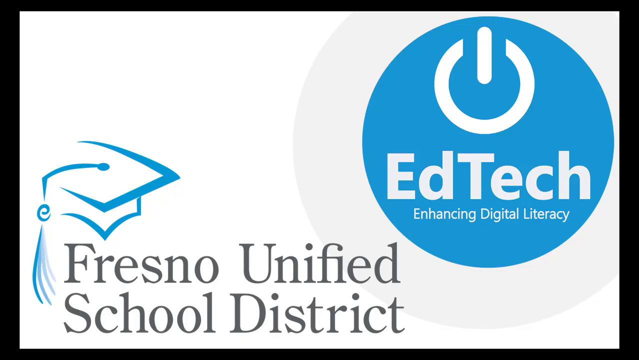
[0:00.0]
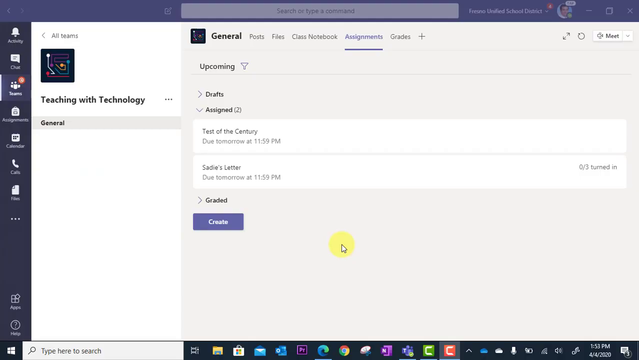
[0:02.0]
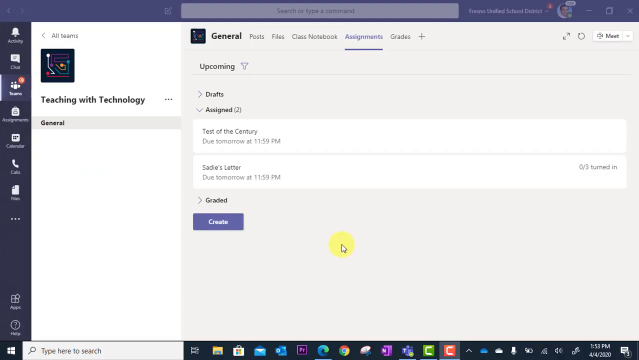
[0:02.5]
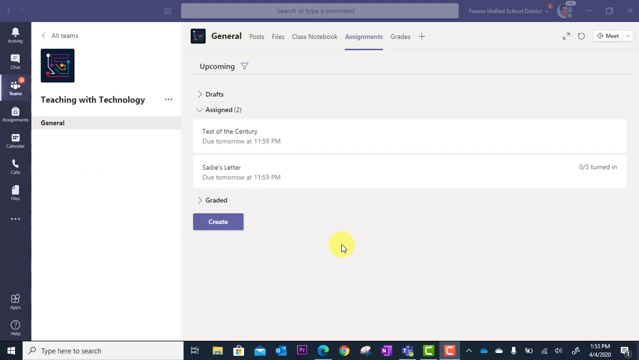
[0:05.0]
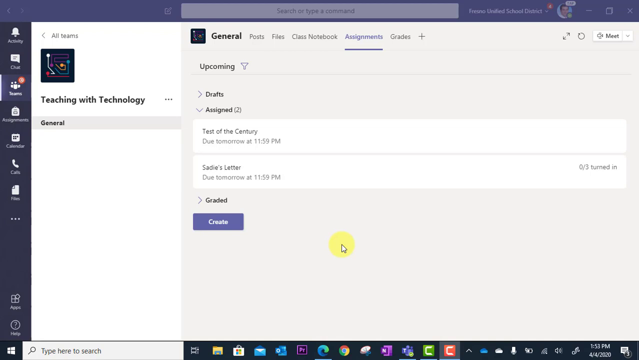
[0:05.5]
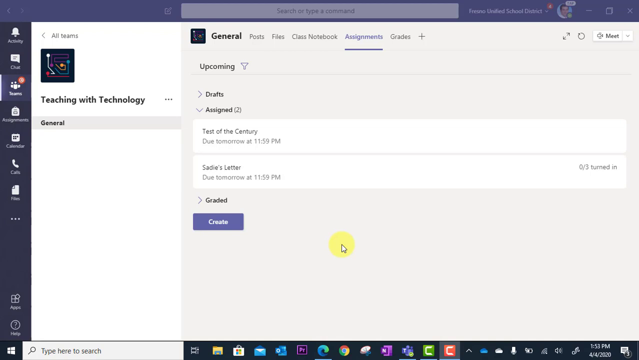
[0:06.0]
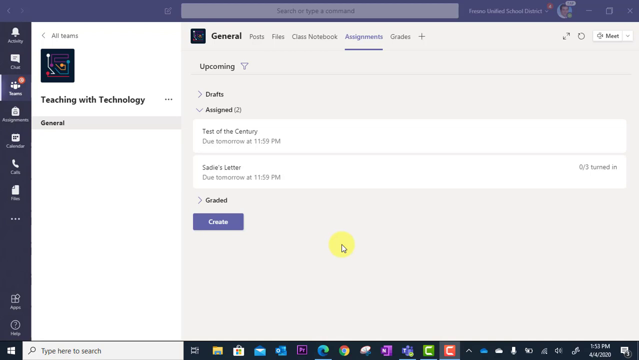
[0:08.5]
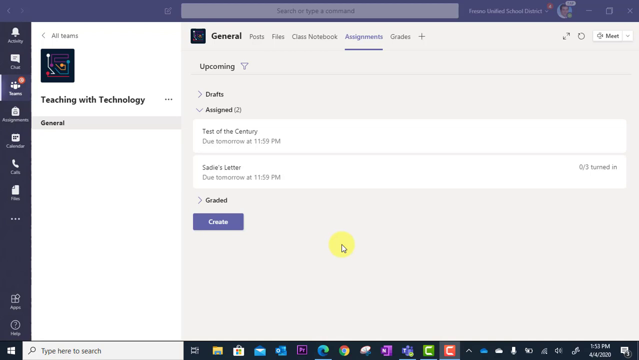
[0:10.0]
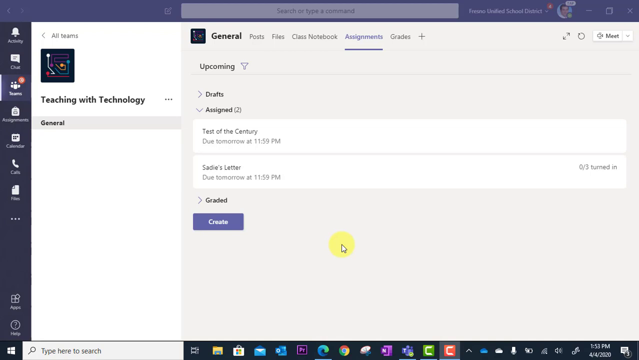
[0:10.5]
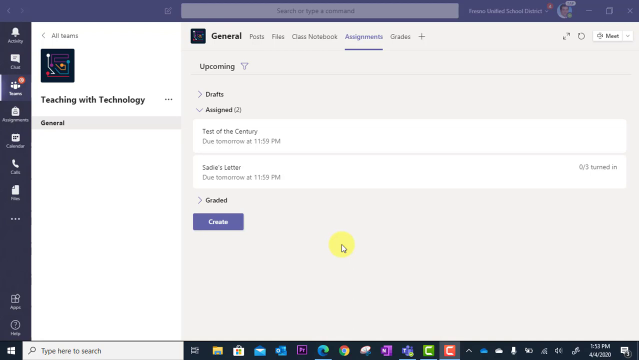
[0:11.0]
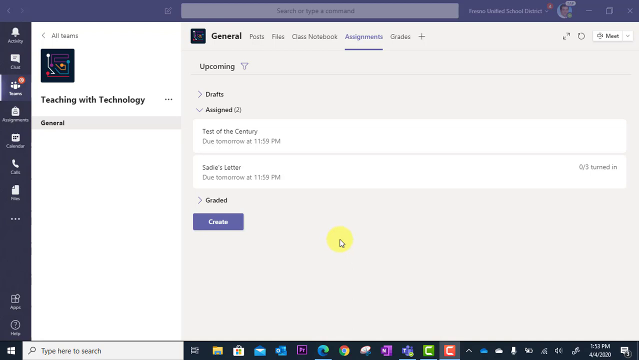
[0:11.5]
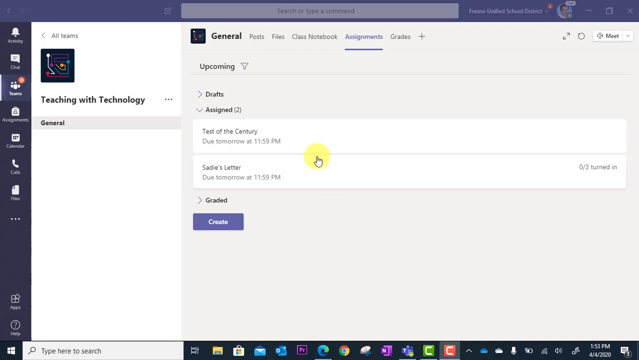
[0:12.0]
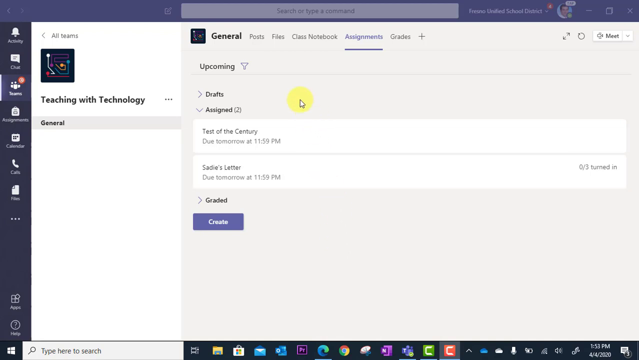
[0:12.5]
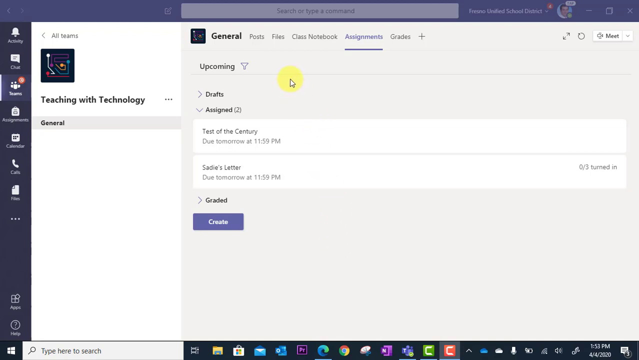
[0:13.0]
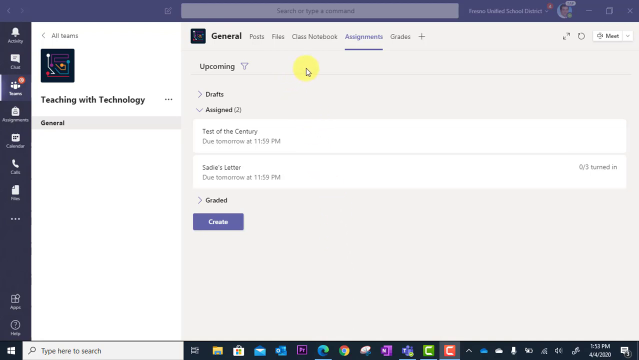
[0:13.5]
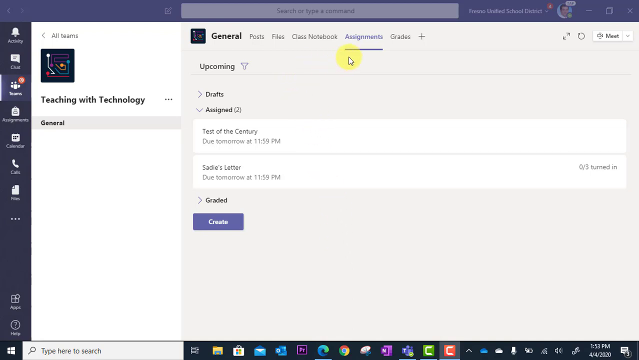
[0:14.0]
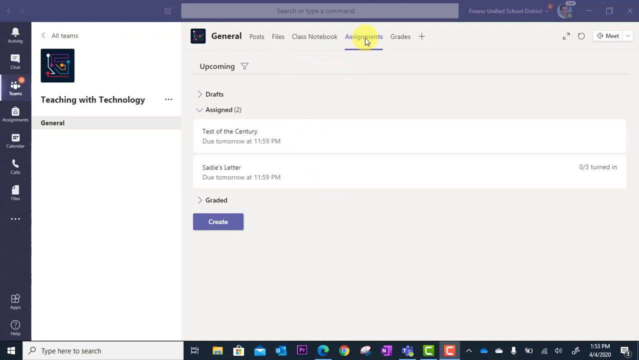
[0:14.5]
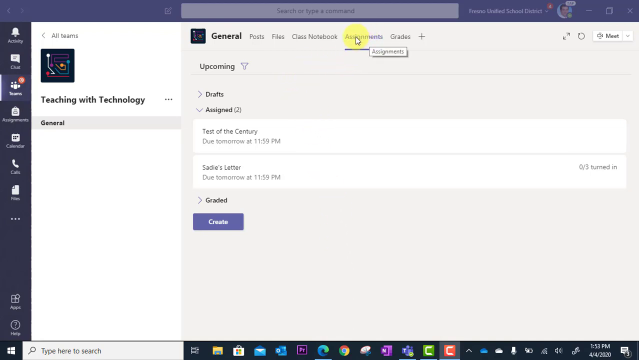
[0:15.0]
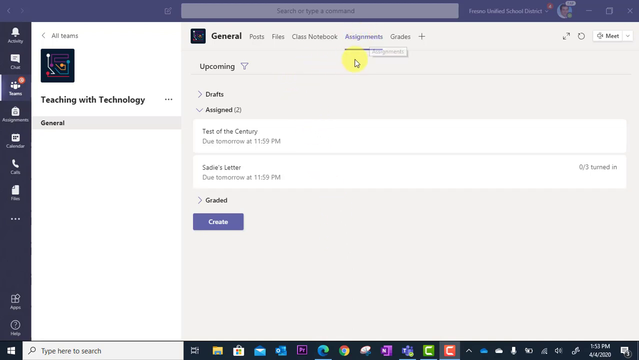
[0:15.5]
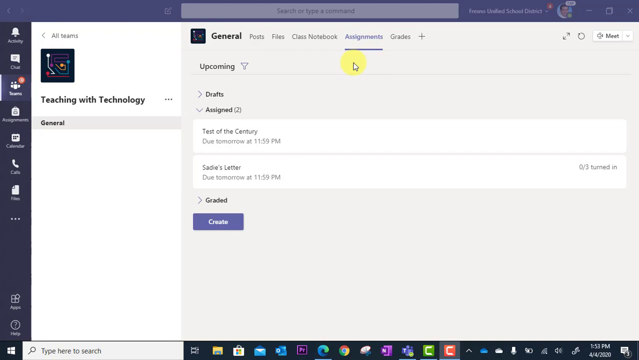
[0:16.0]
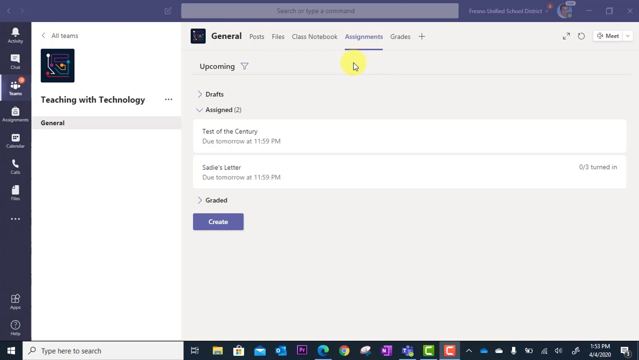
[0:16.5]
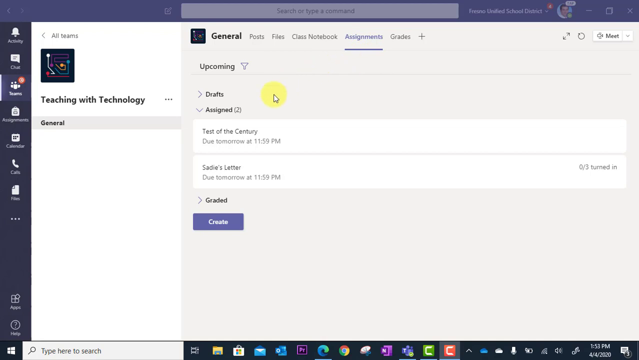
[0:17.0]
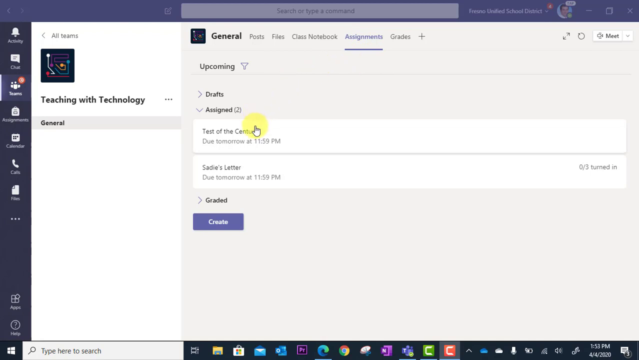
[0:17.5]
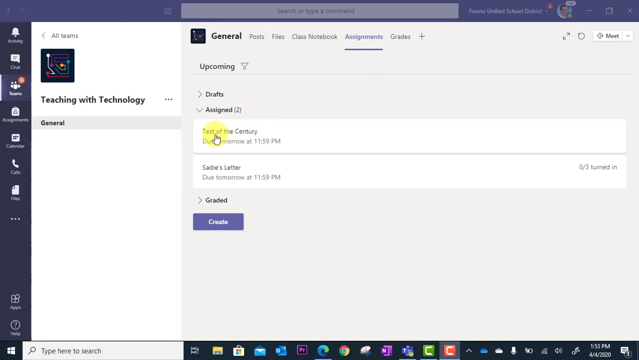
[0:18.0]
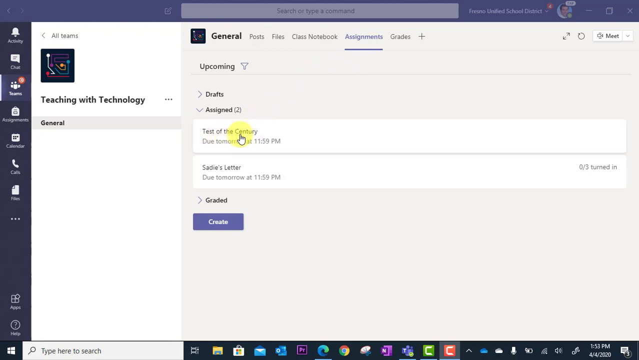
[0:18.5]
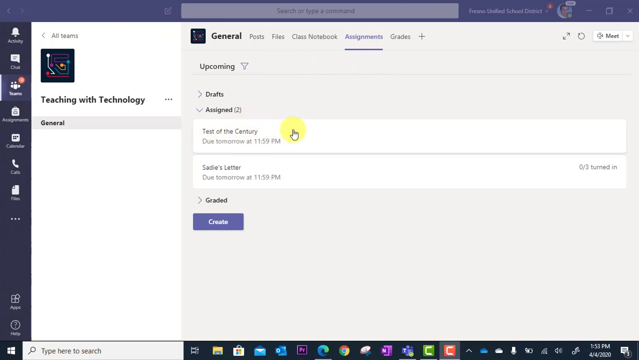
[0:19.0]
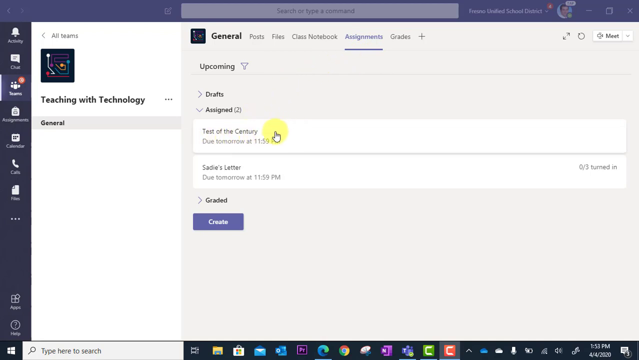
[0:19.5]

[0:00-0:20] A computer screen shows a Microsoft Teams interface open to a class workspace titled "Teaching with Technology." The left side of the window contains the navigation panel, where "General" is highlighted under the team name. In the top menu the "Assignments" tab is active, and beneath it the view is set to "Upcoming." Two assigned tasks are listed under the "Assigned" section: the first is "Test of the Century," due tomorrow at 11:59 p.m., and the second is "Sadie's Letter," also due tomorrow at 11:59 p.m., with a status showing 0 out of 3 turned in. On the right, below the Assignments, is a purple "Create" button. Further down is a Skills list and a collapsible "Graded" section. The computer's desktop taskbar is visible at the bottom, showing application icons such as Microsoft Edge, Excel, PowerPoint, Word, Outlook, and Teams. The scene then transitions to a static slide featuring two logos side by side on a white background. On the left is the Fresno Unified School District logo: a stylized blue graduation cap with a tassel-shaped lowercase "e" above the words "Fresno Unified School District" in a gray serif font. On the right is the EdTech logo inside a blue circle, with a white power button symbol above "EdTech" in bold letters and the tagline "enhancing digital literacy" written below in smaller font.